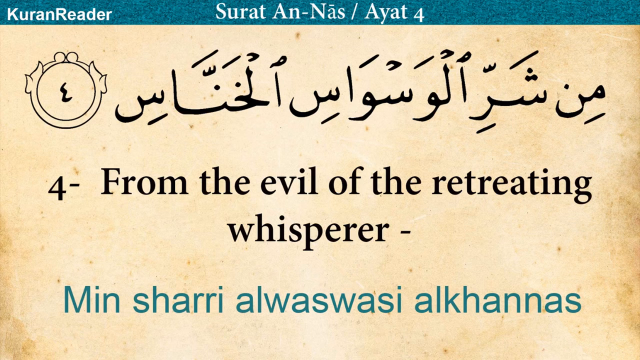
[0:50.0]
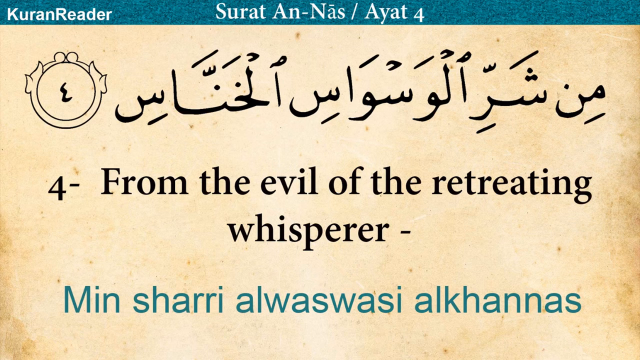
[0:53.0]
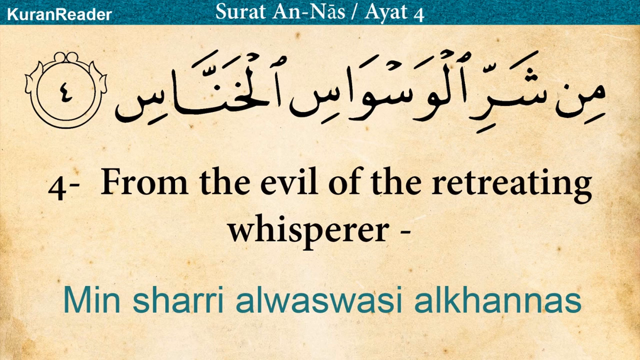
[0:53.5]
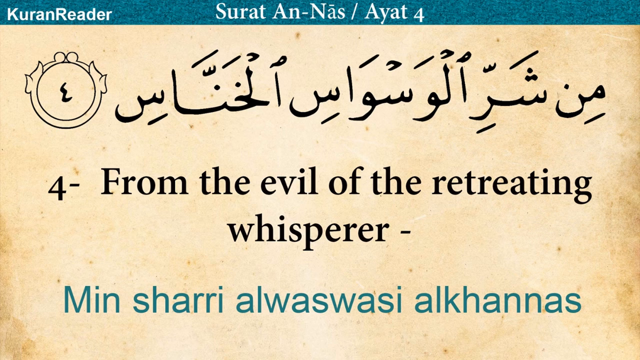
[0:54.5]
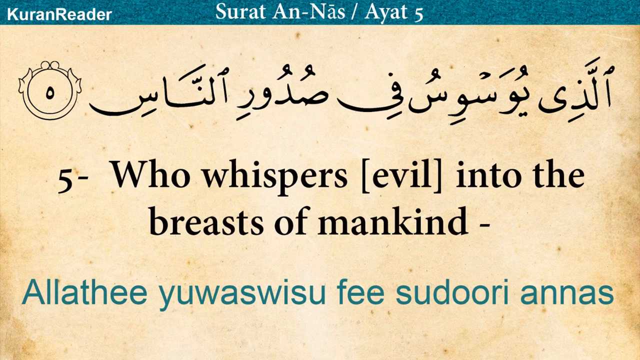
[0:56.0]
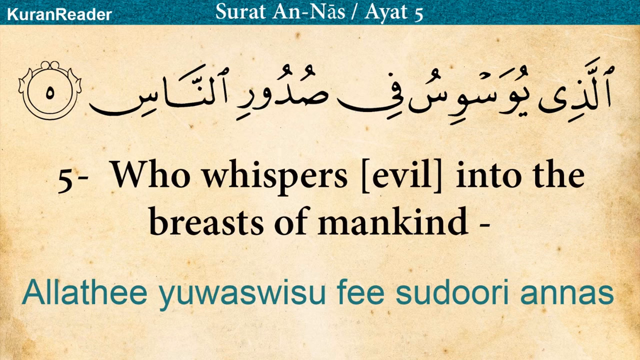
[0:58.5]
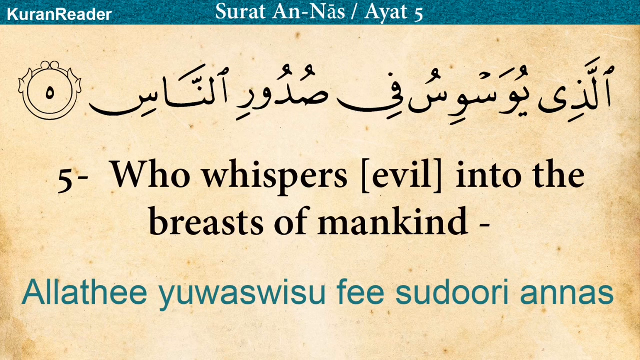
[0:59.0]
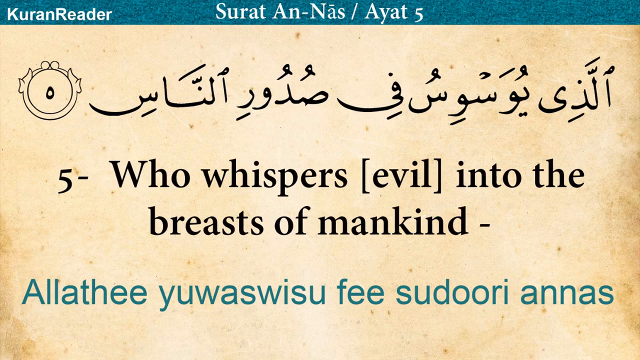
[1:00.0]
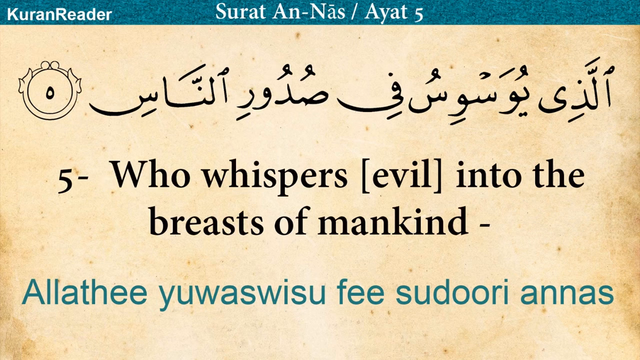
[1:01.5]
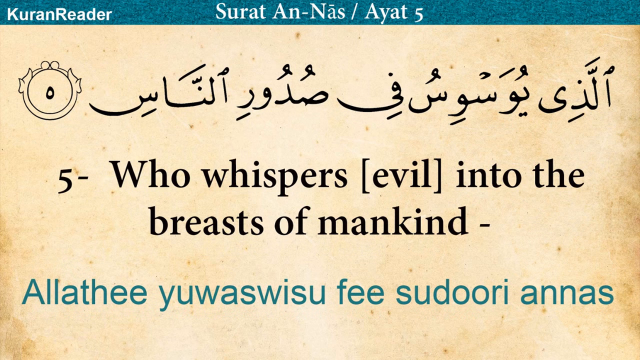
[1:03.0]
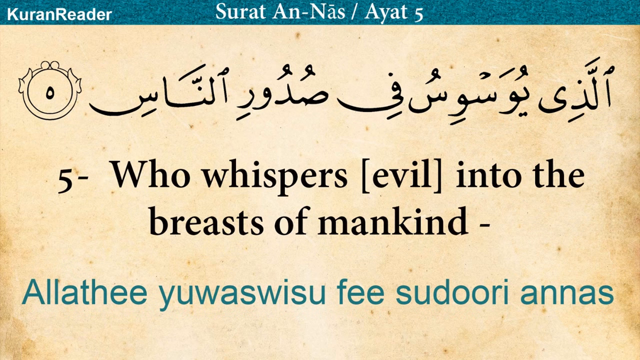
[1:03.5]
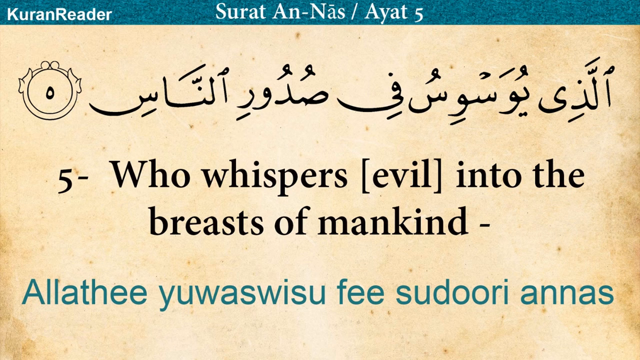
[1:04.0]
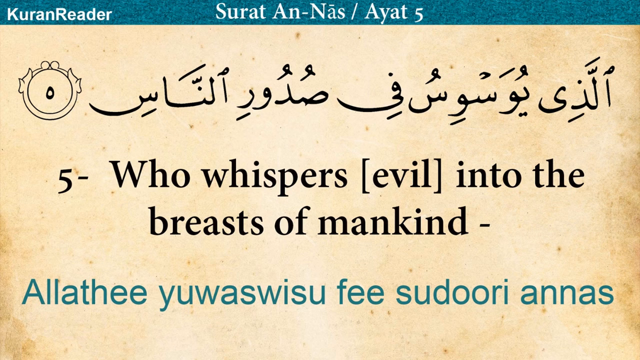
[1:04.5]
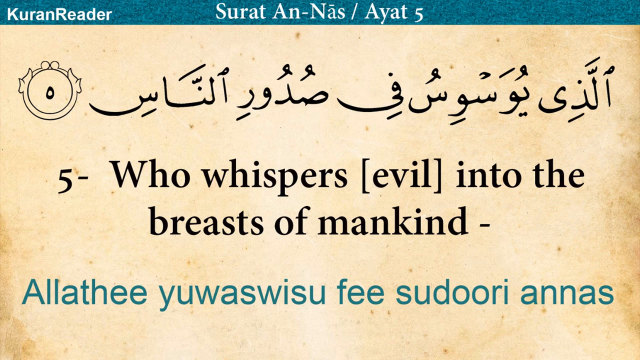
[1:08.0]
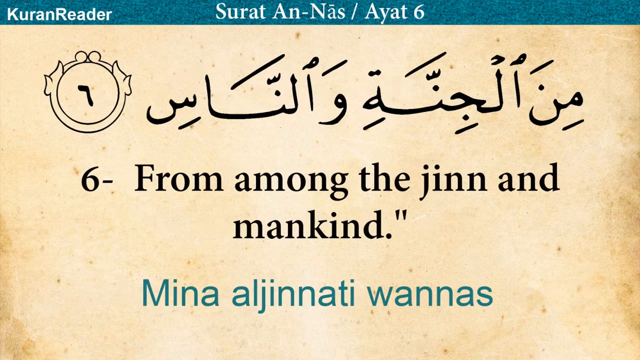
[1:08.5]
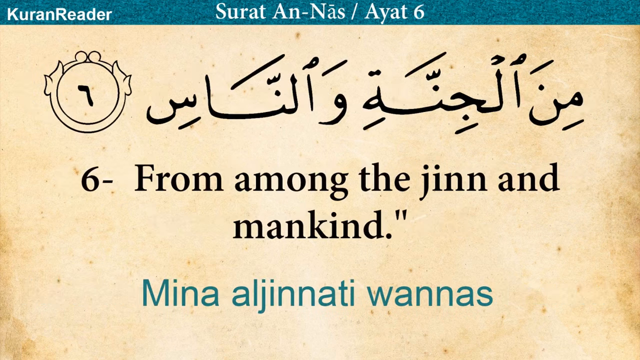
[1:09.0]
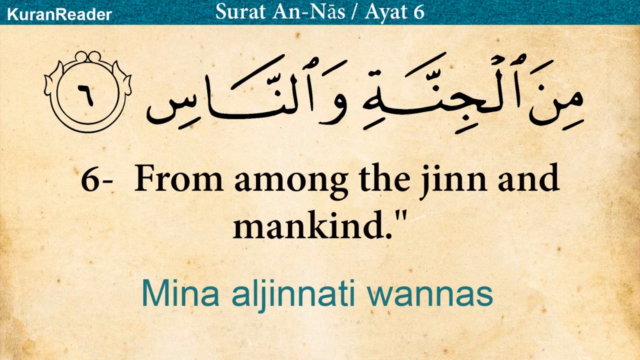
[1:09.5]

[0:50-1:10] Ayat 5 reads "5 - who whispers evil into the breasts of mankind -", ending on a dash, with the word "evil" in square brackets. The slide then goes to Ayat 6, which reads "6 - from among the jinn in mankind". On each slide the Arabic script at the top takes up a single line, which is longer or shorter depending on the verse. There is always room for the small drawing that looks like a watch face in the upper left. The drawing is the same every time, but inside it is a bold symbol that changes subtly from slide to slide and seems to relate to each verse. The translation at the bottom is also always on a single line, taking up as much space as its length needs.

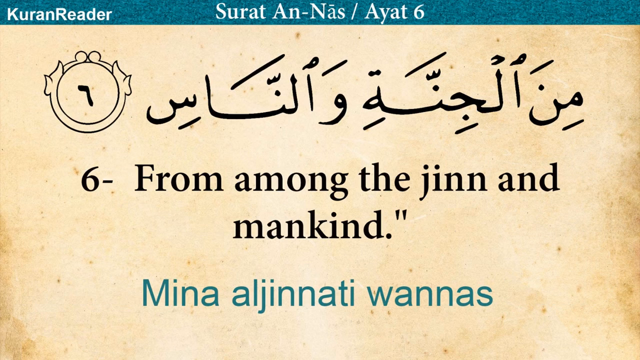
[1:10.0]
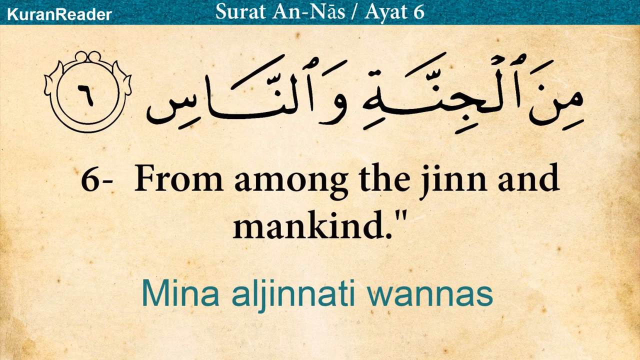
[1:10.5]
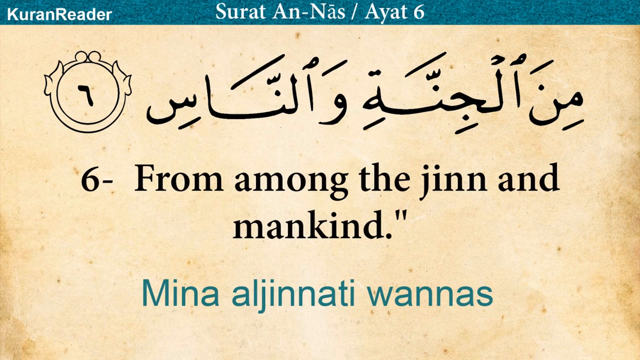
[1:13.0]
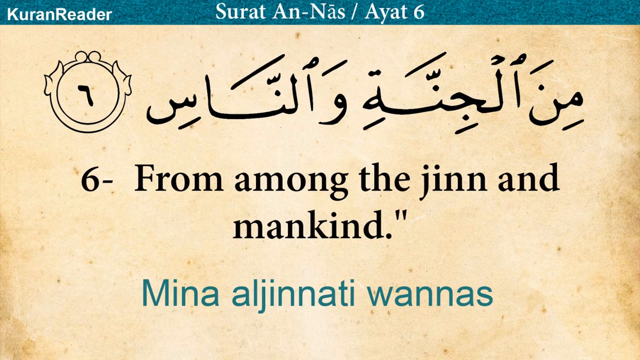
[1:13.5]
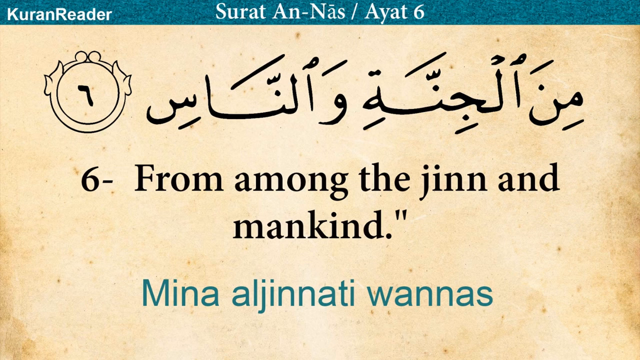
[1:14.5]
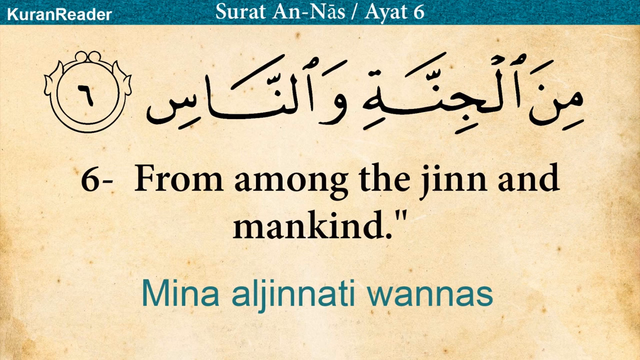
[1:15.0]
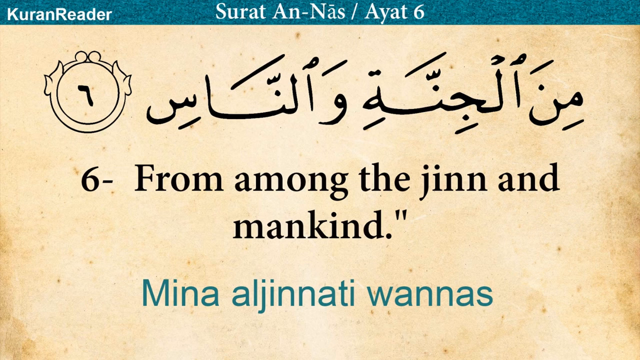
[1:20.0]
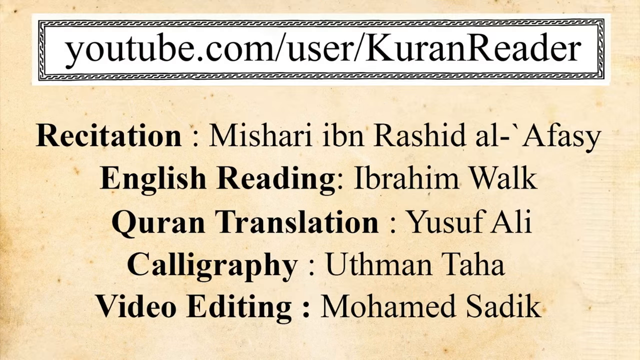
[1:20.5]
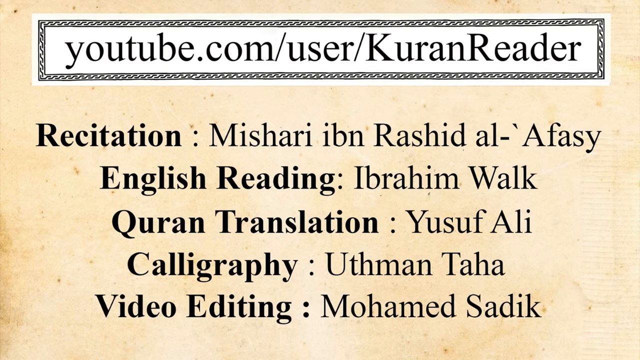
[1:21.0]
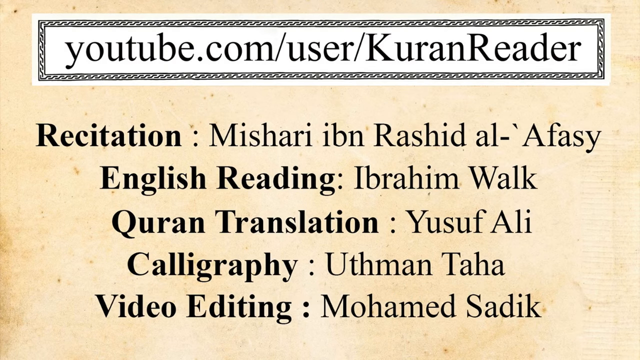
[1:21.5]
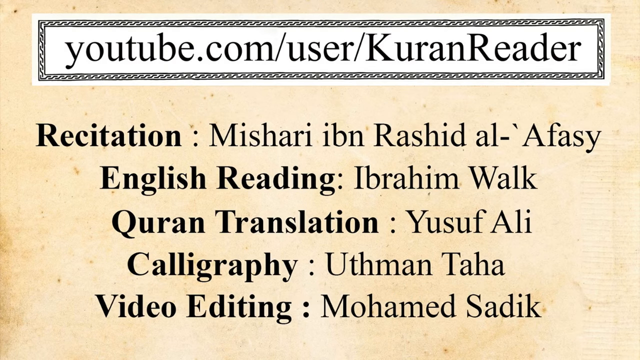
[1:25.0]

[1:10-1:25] The last slide is a credit page. It no longer has the blue banner across the top, only the yellowed paper background. At the very top is a white box with a black background containing the YouTube link "youtube.com/user/KuranReader". Below it are the credits: "Recitation: Mashareh Ibn Rashid Al-Afasy", "English reading: Ibrahim Walk", "Quran translation: Yusuf Ali", "Calligraphy: Uthman Taha", and "Video editing: Mohammed Sadiq". The transitions between the slides are very simple, going from one page to the next without any animation or added visual elements.